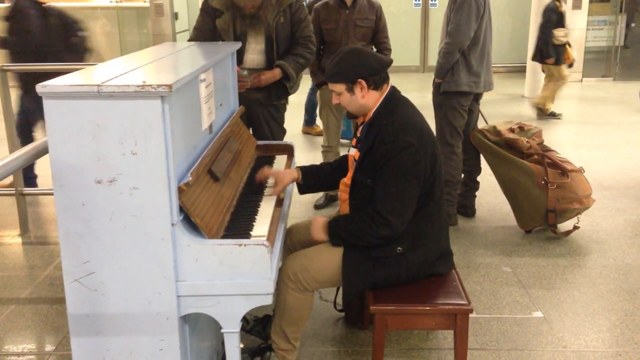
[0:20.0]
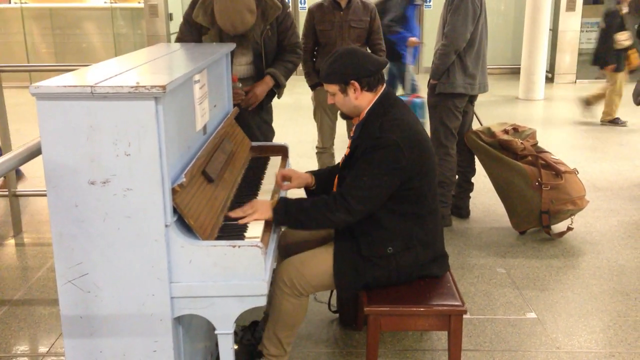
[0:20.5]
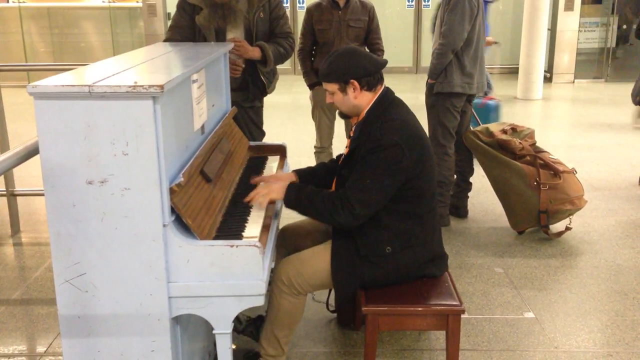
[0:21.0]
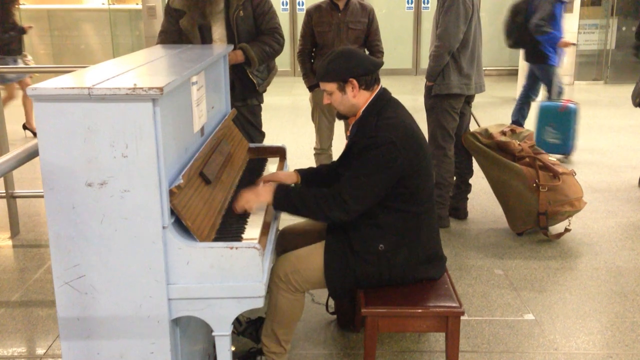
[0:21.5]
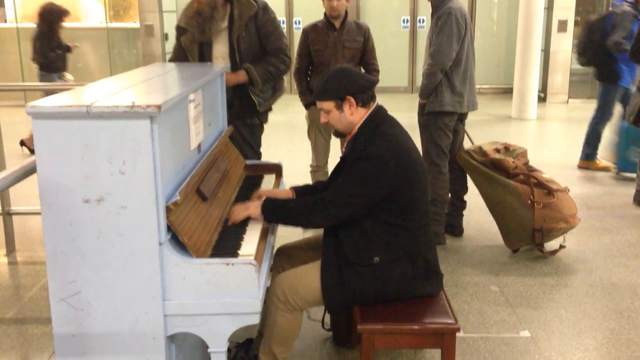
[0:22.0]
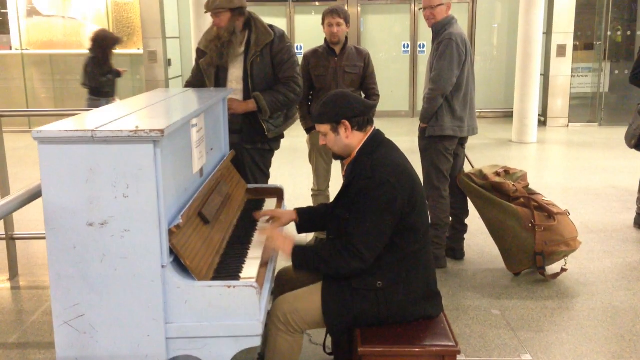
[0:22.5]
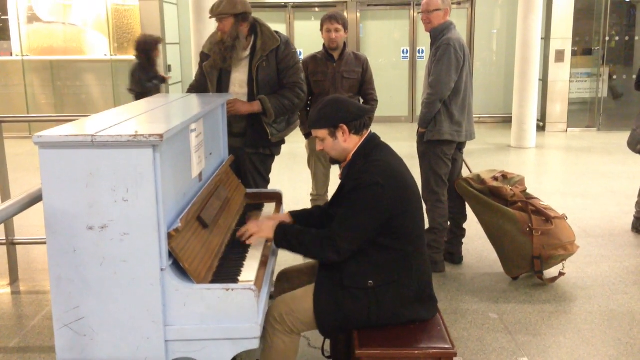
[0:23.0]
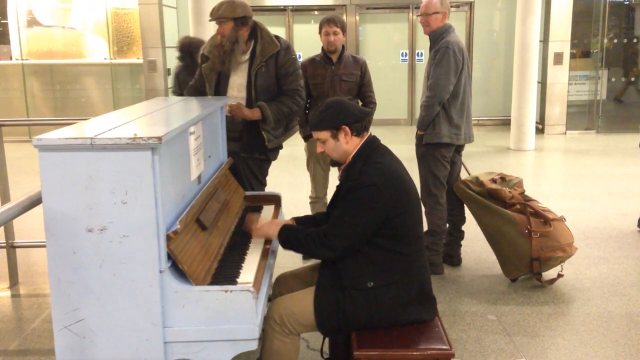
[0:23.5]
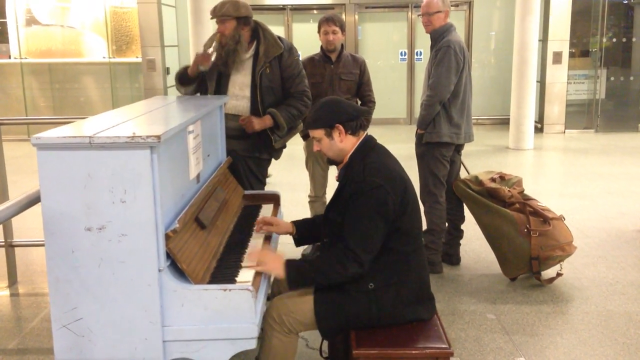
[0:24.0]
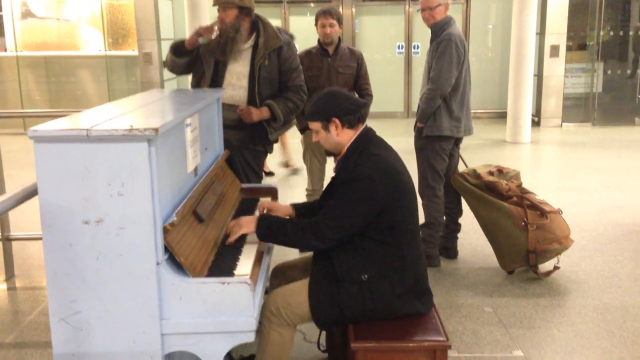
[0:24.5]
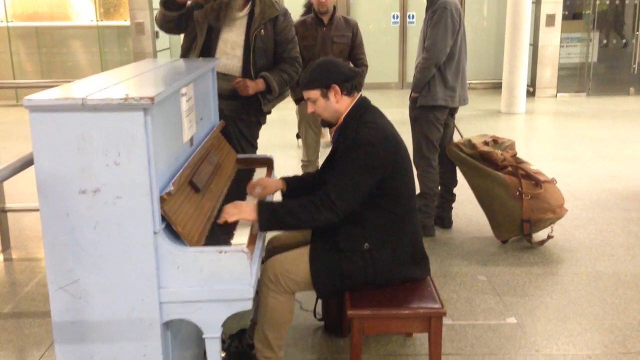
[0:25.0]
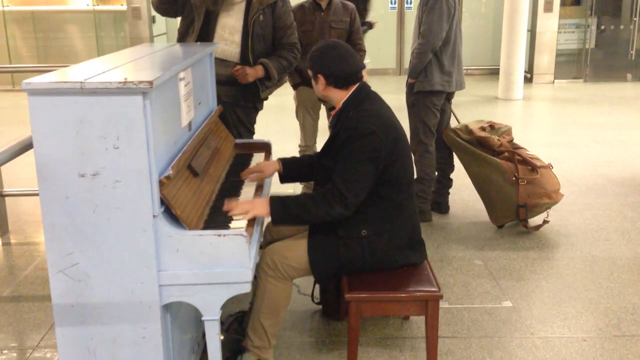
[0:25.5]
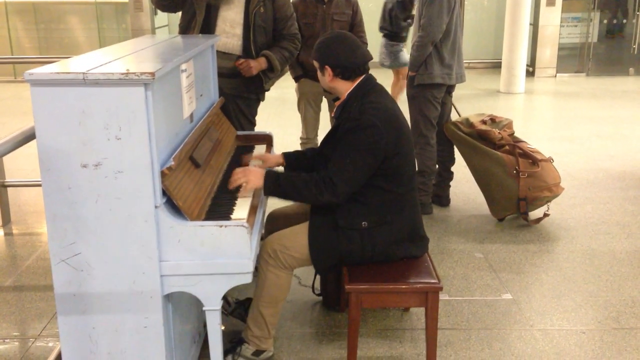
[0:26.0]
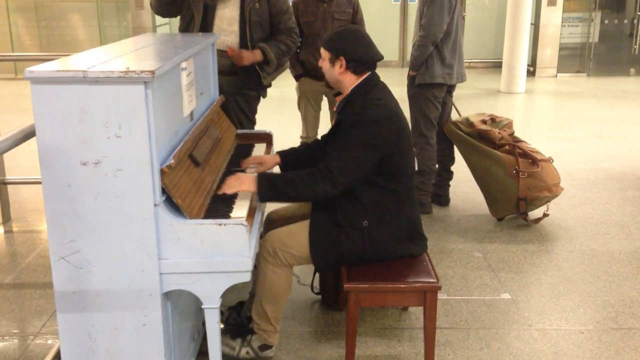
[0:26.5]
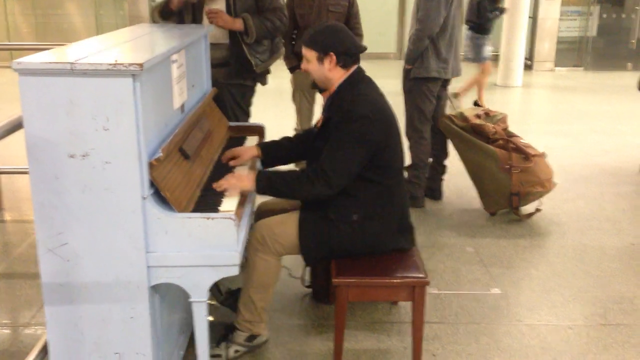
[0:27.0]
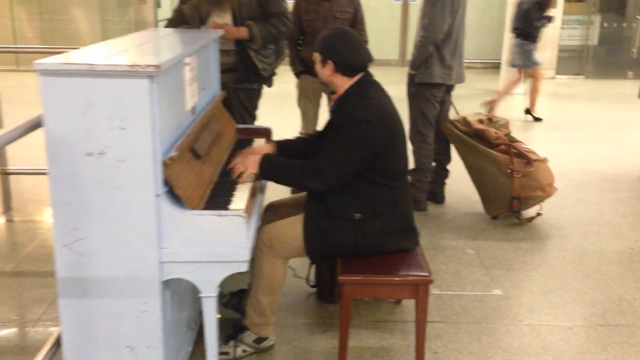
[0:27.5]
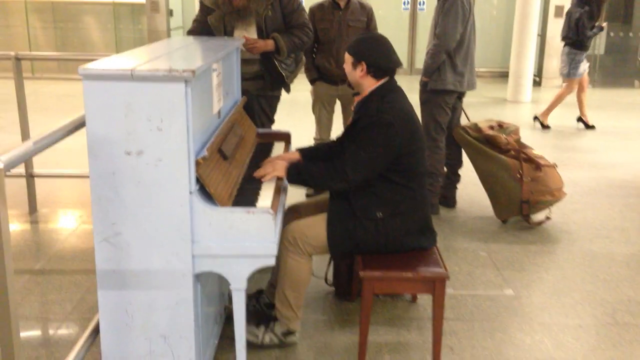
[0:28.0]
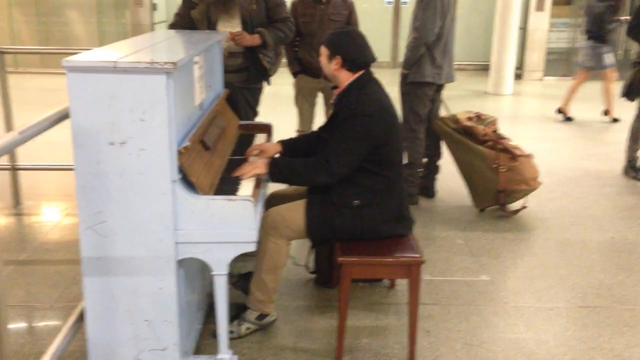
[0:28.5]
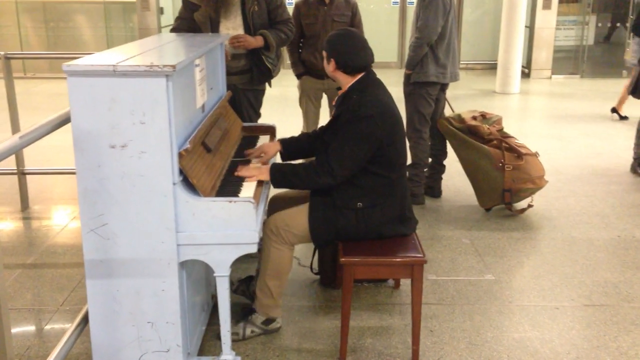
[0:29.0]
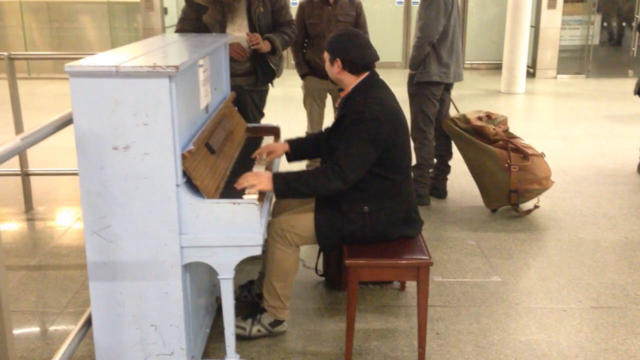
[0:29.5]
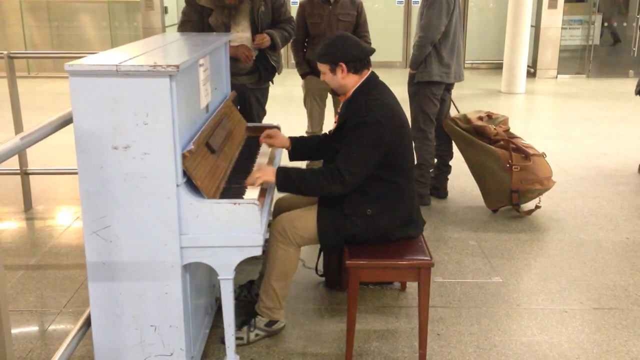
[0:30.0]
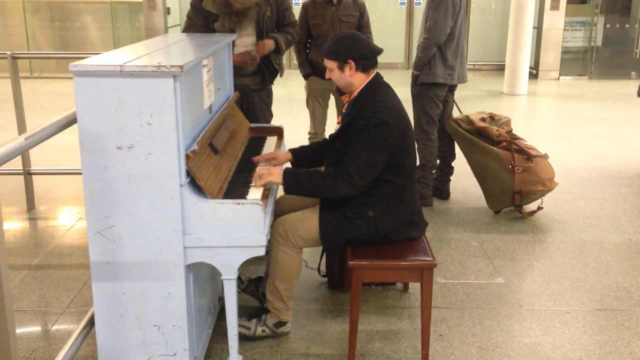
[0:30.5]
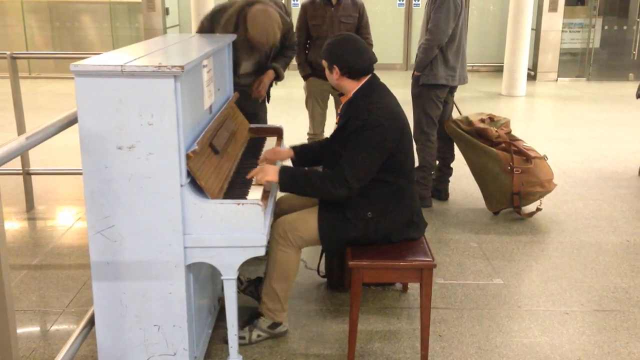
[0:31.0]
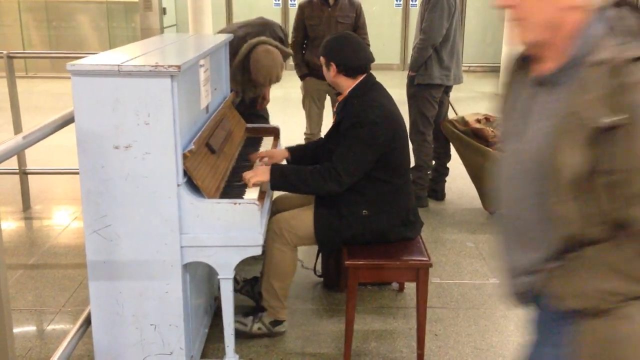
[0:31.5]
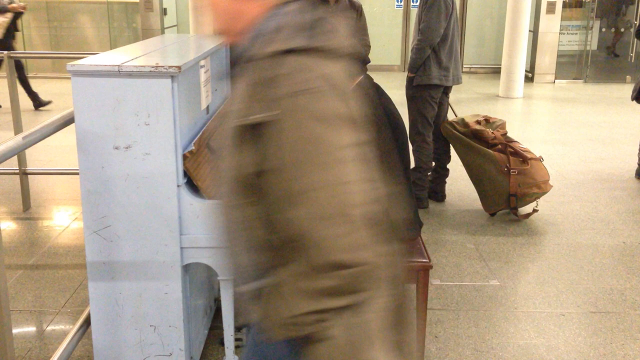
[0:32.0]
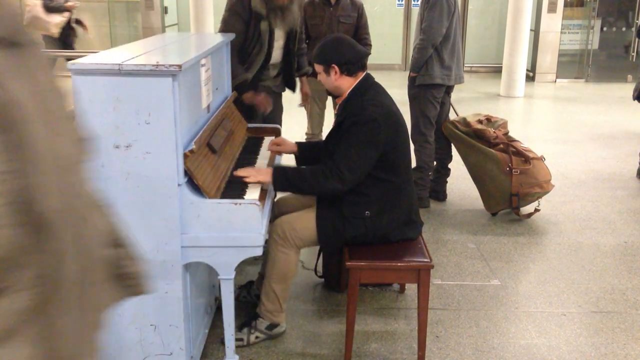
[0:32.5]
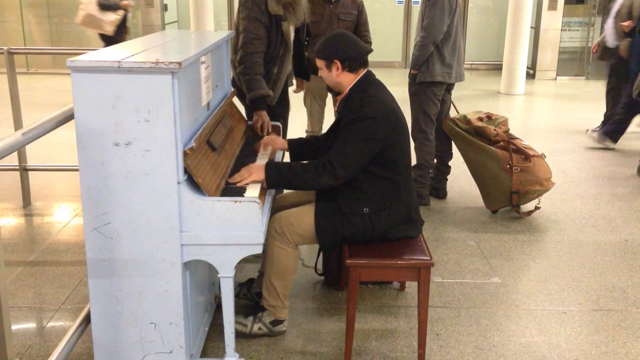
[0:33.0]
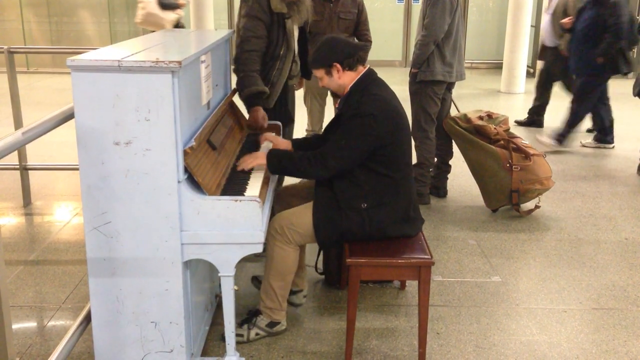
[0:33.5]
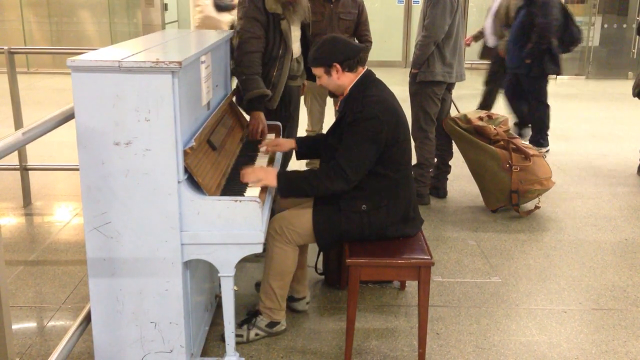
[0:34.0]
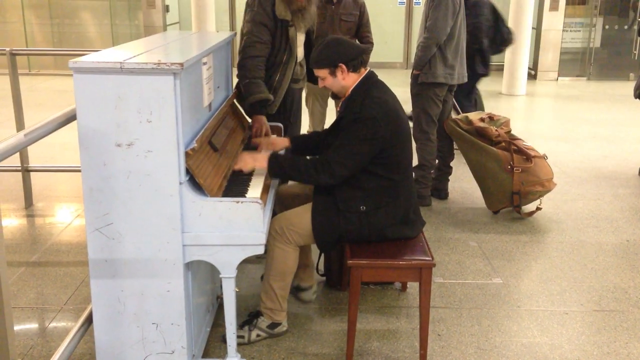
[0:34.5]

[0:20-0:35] The man in the black blazer and black hat taps away on the piano, tickling the ivories. He seems to be really into it, his head bobbing and moving back and forth, and his feet tap on the ground, stomping out on the pedals. He sits on a brown bench as he plays. A larger man with a large beard is beside him, drinking some water, and two other men stand there enjoying the music. Many people pass back and forth. The place is indoors, some type of train station, bus station or subway, a place for traveling, with a lot of people carrying luggage. The white piano is chipped and marred, clearly used a lot by many people.